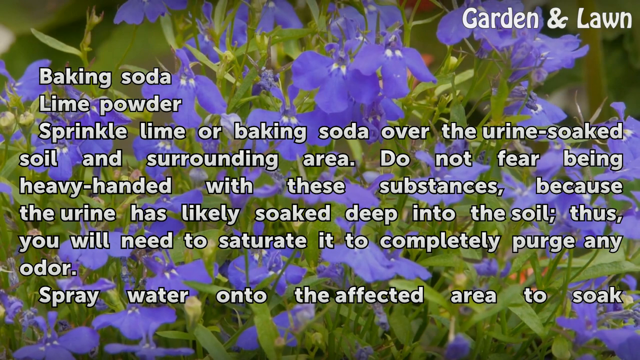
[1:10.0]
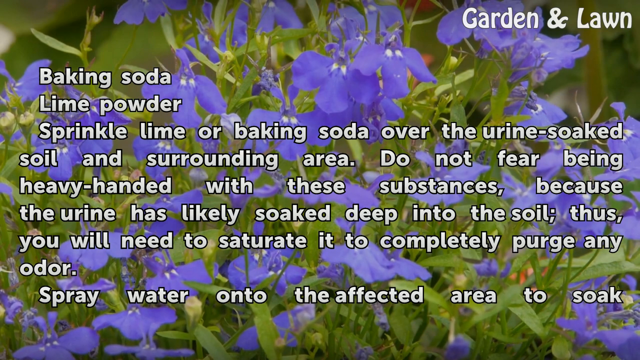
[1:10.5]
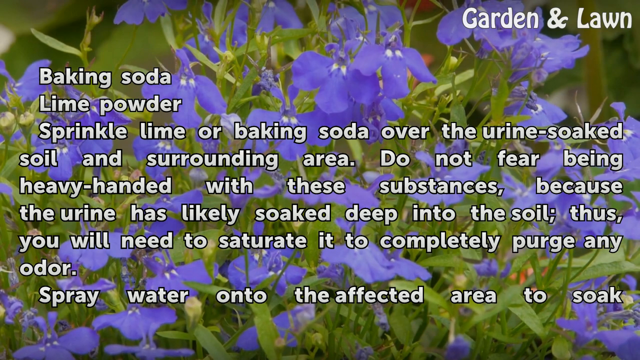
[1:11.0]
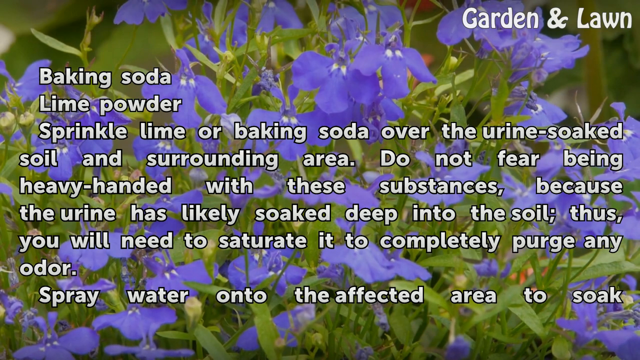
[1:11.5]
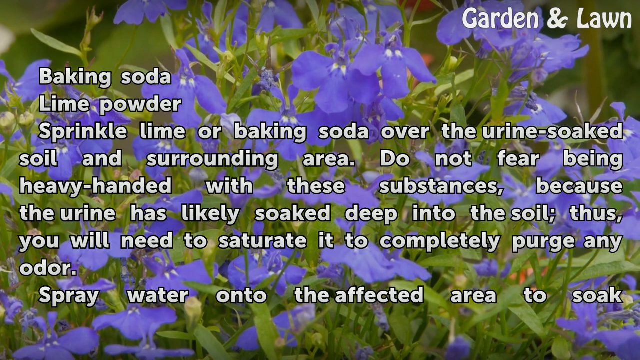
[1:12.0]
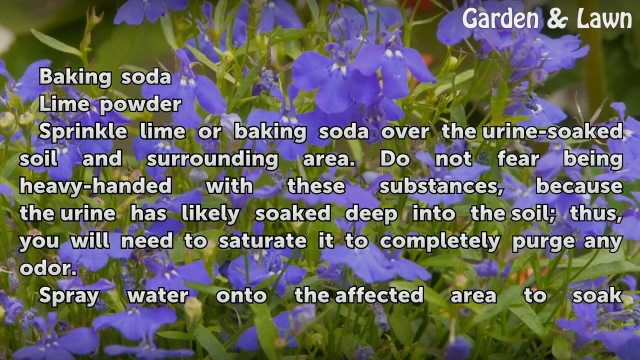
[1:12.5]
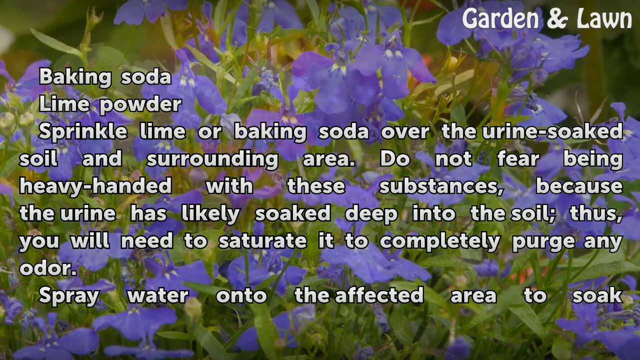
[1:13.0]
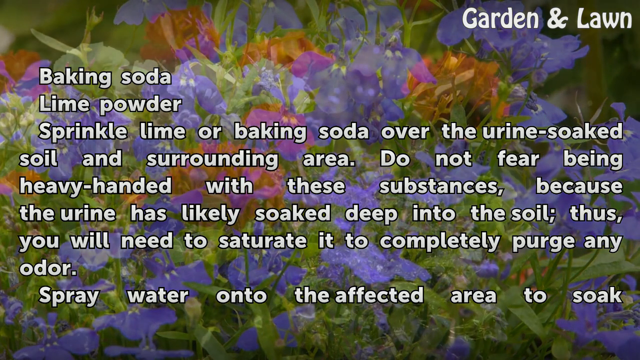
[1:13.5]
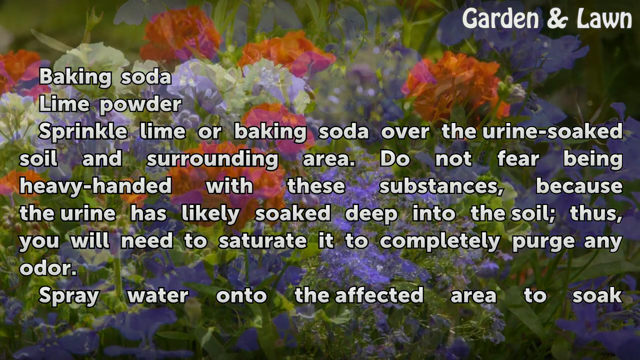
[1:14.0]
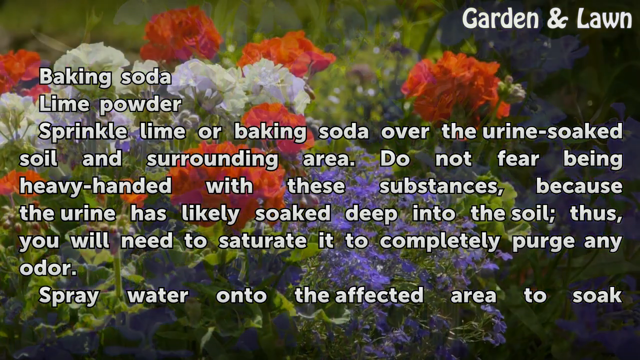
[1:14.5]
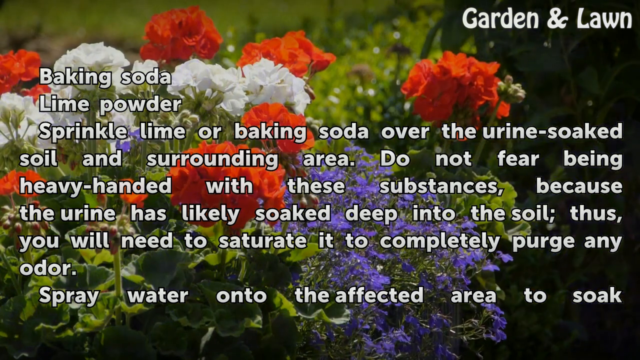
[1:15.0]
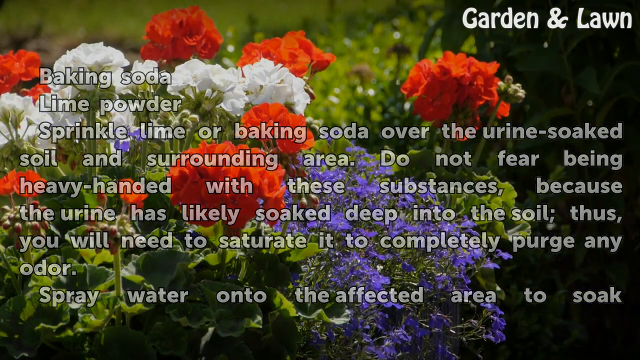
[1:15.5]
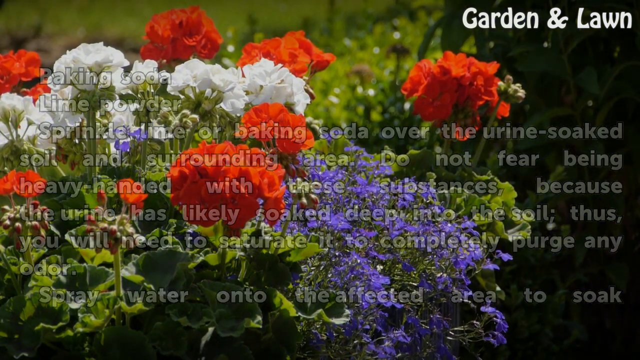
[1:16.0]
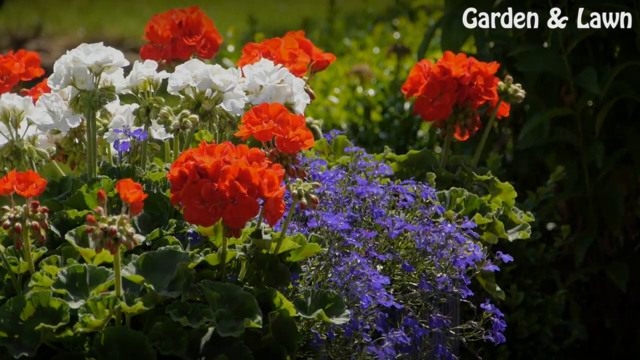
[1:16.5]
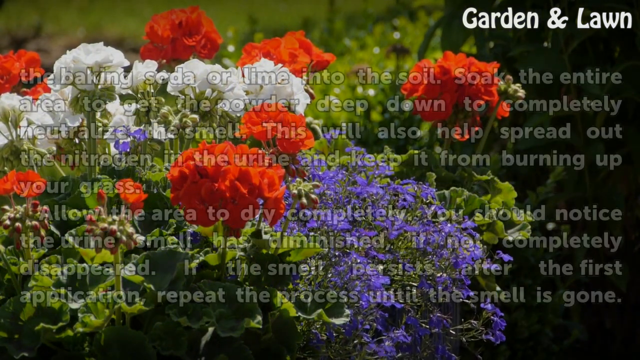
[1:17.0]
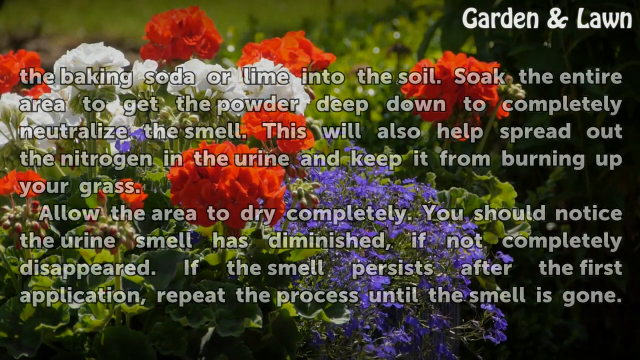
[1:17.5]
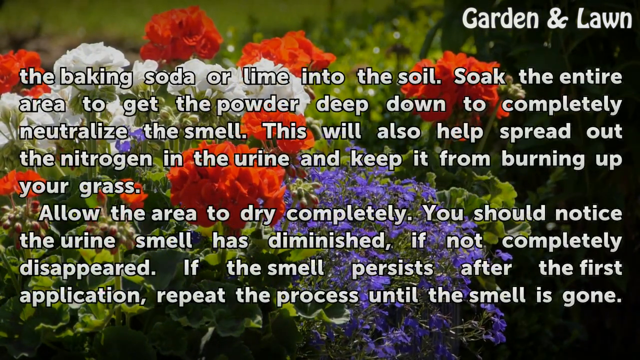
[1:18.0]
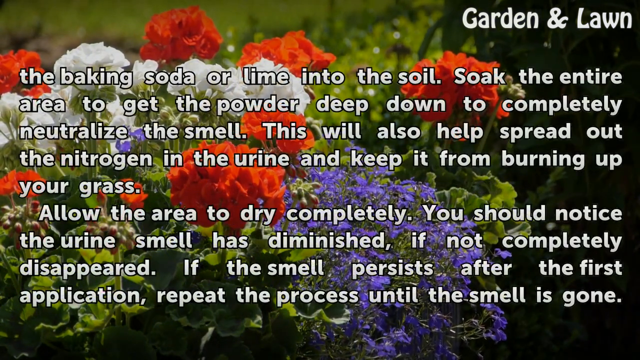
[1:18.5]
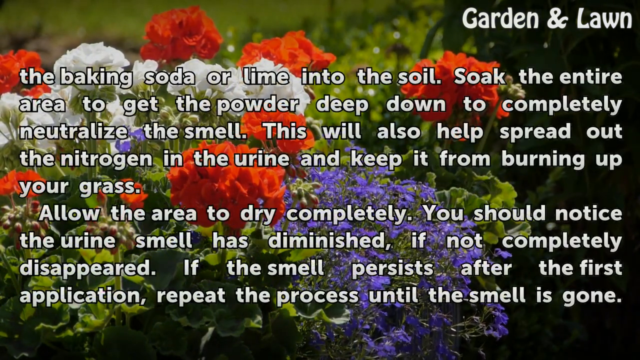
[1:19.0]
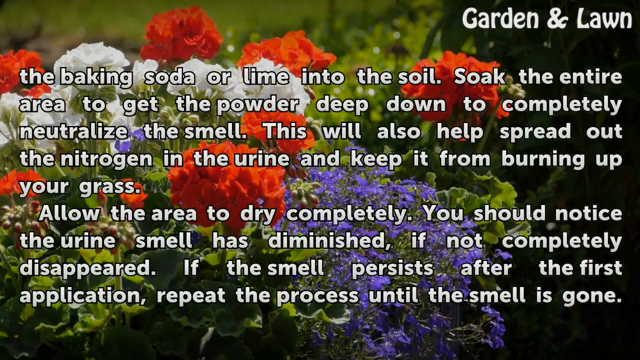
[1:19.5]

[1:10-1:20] Small green curved things come out of the center of the flowers, where the pistils are. More green foliage is at the bottom of the screen. At the bottom left, a purple flower is seen from the side, its petals curving down a little, while the majority look up toward the top. Around the middle of the flower there is a little whitish and green, coming down to a point. The scene changes to carnations: two stacked on top of each other, two smaller ones to the left, and a row of white carnations behind them. A red carnation is to the left of the white one, then a little space, two more in a row, more space, and another carnation.